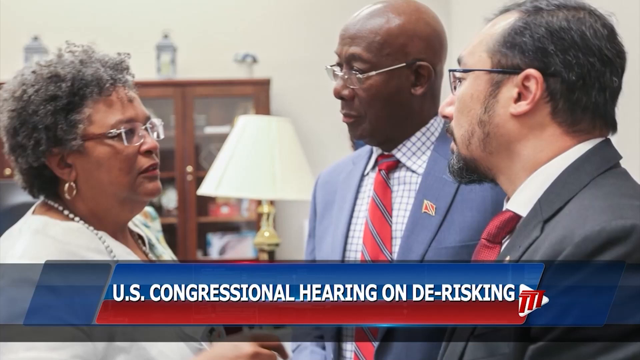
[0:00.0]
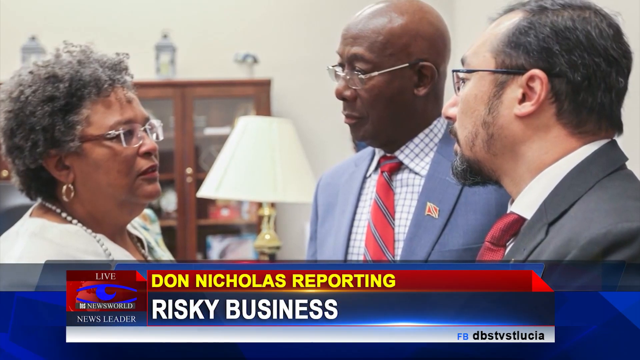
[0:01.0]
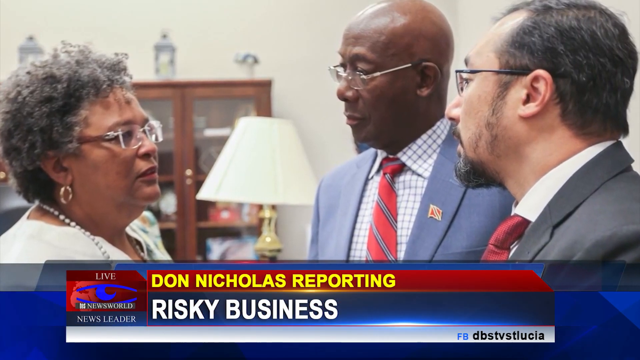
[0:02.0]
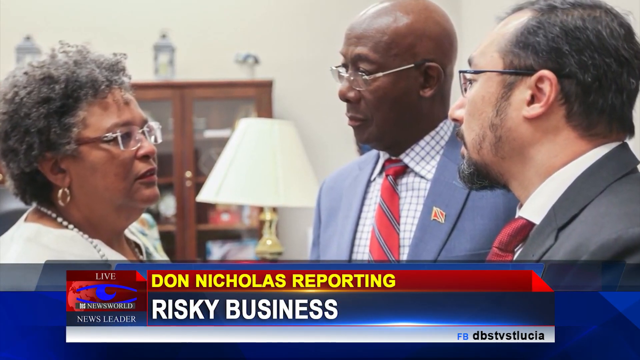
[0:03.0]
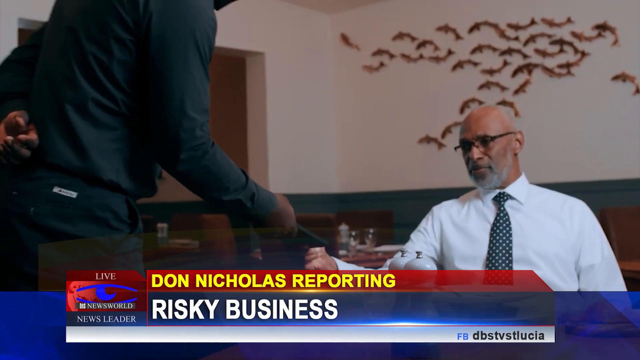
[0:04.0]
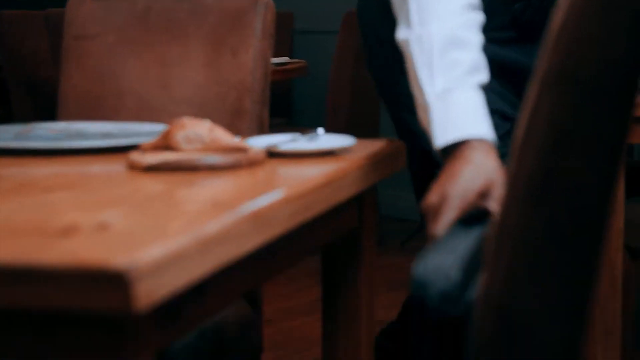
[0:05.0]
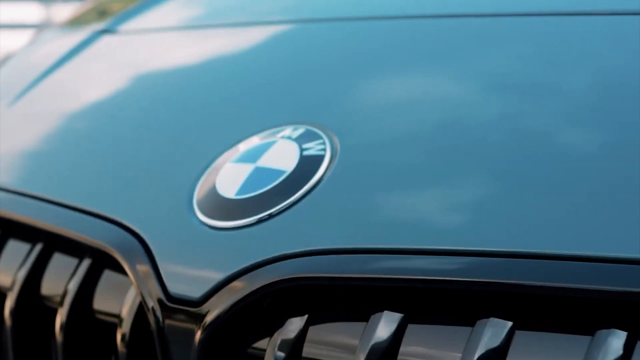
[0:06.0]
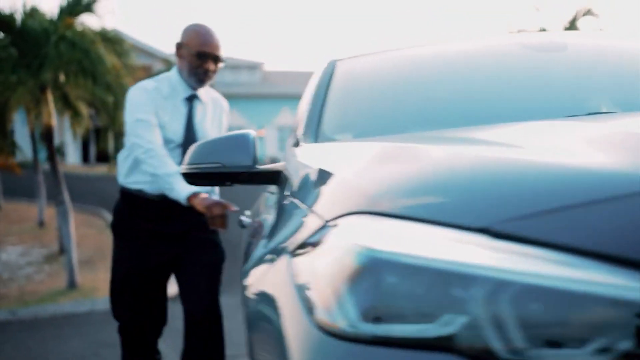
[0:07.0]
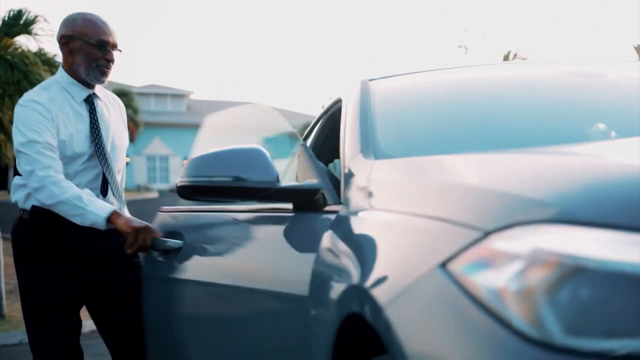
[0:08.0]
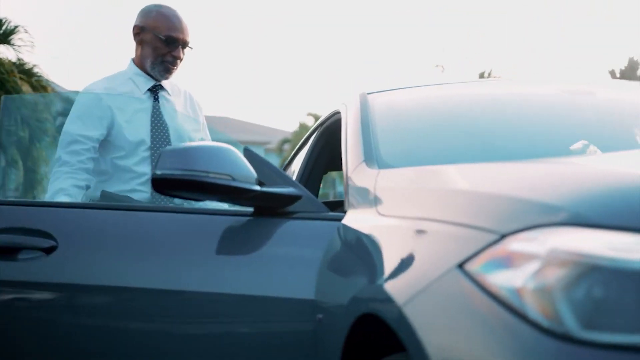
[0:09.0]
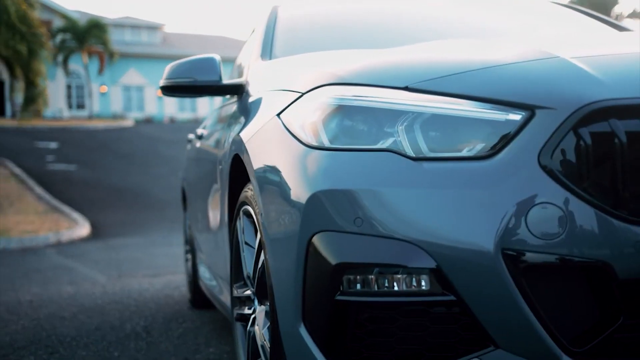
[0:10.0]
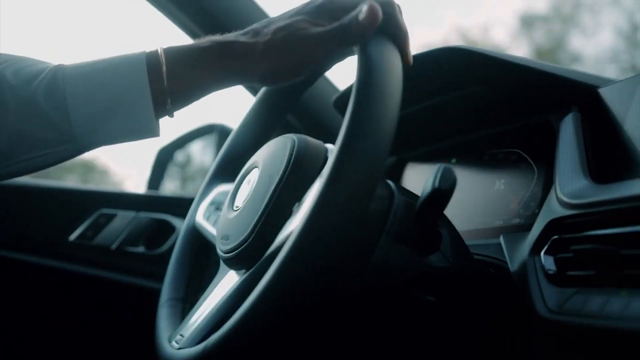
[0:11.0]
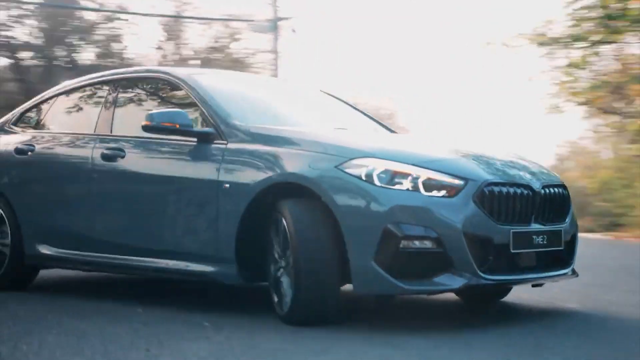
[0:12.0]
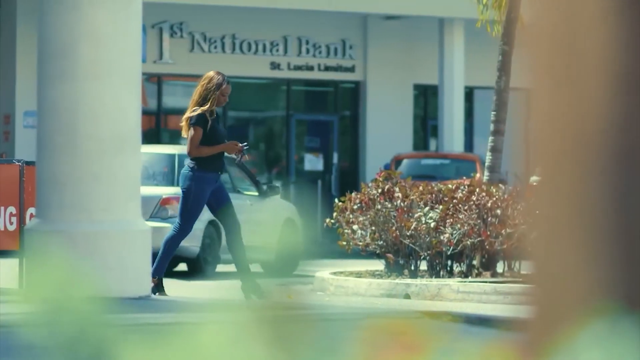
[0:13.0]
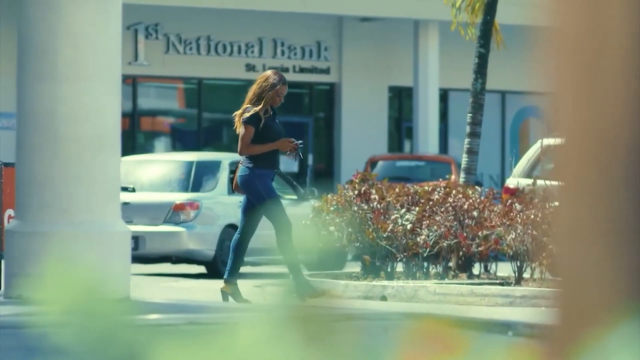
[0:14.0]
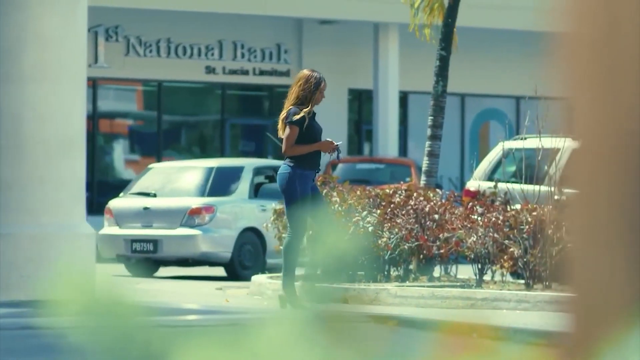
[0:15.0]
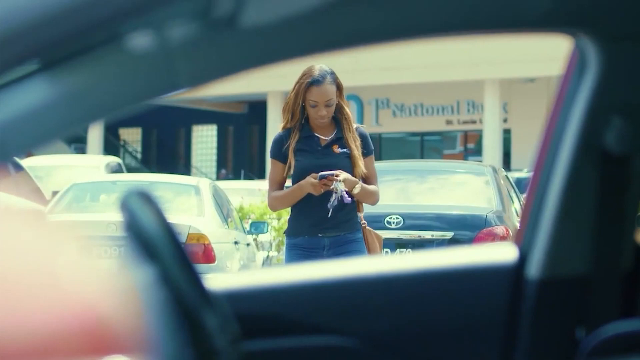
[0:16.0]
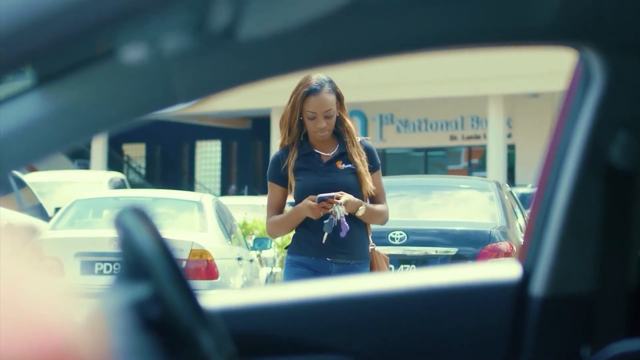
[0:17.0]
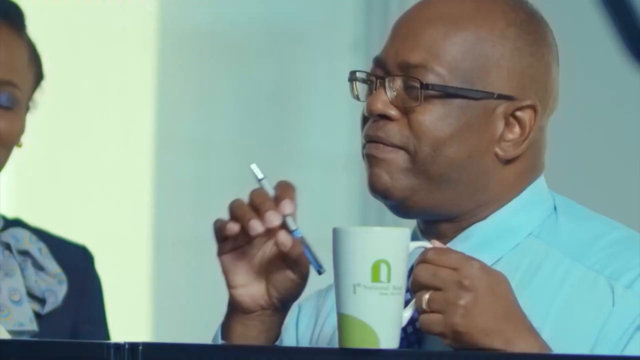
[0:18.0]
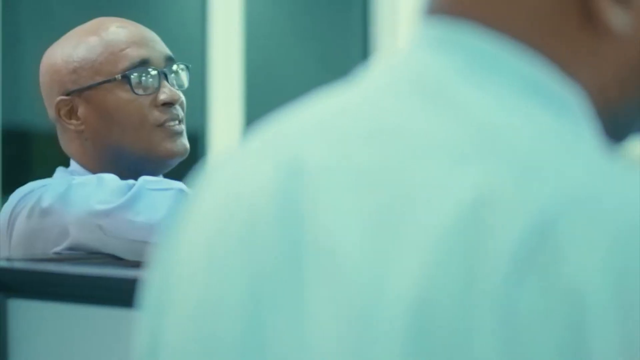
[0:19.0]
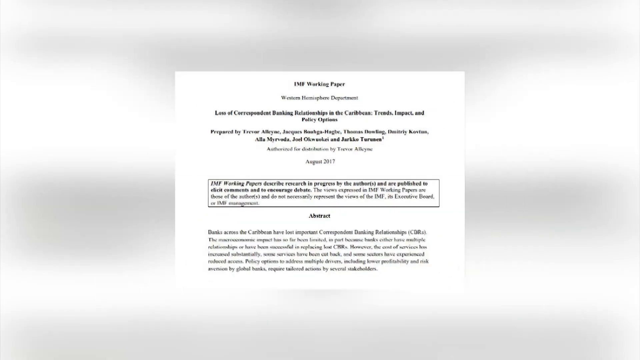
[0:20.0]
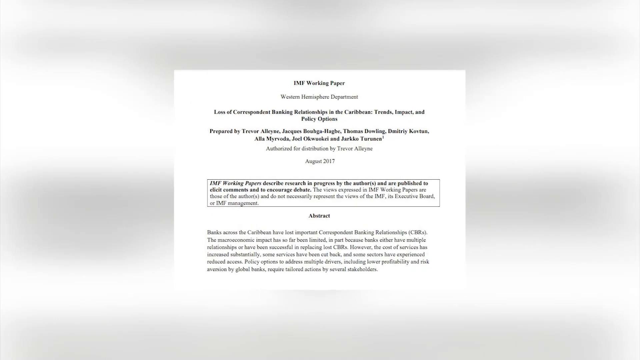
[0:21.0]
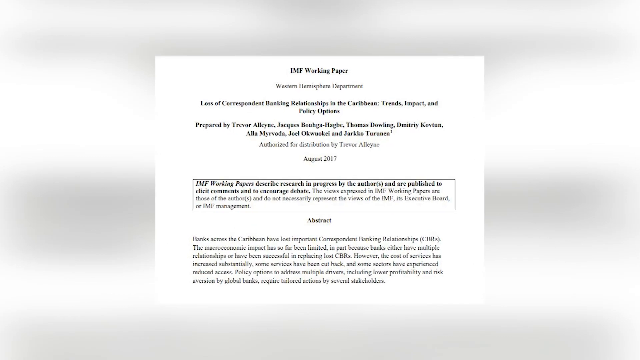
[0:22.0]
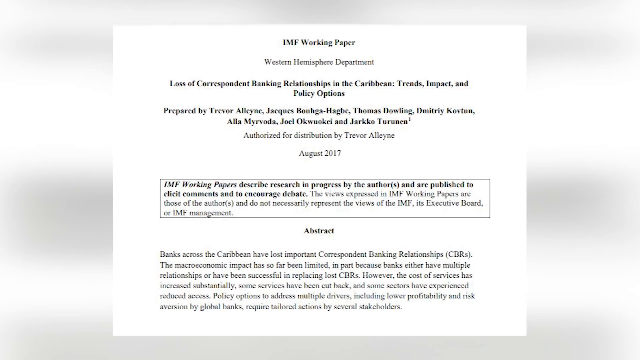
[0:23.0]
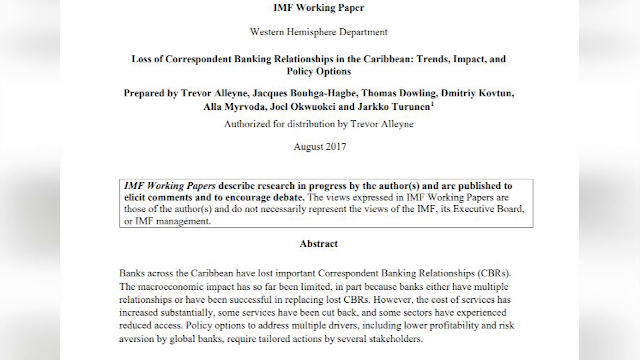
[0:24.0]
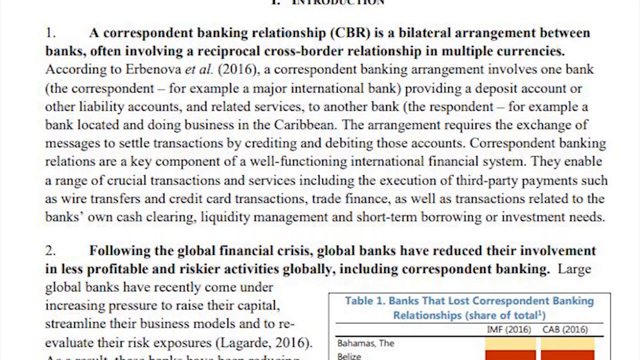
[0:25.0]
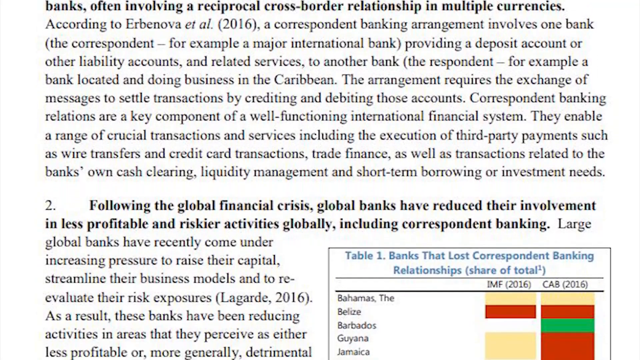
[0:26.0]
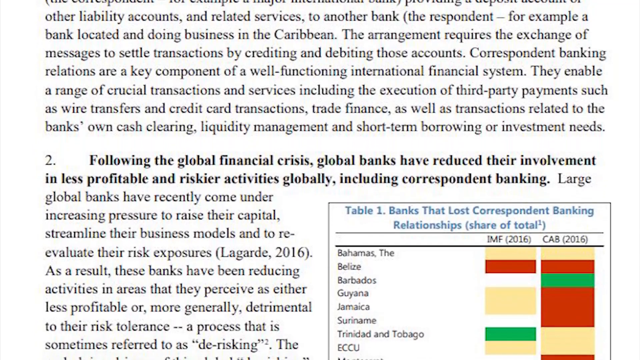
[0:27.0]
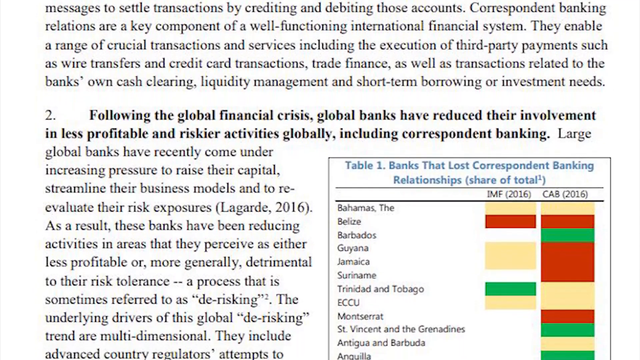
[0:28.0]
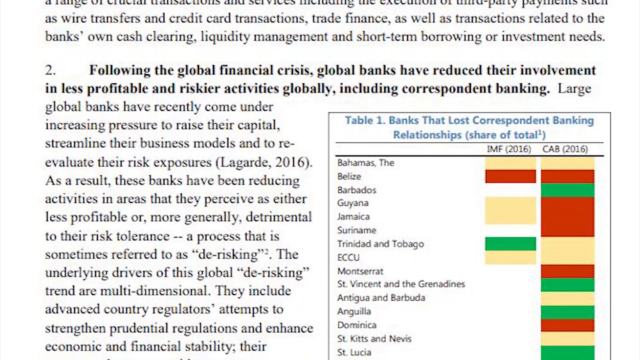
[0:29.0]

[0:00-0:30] White text in all capital letters at the bottom of the screen begins "U.S. Congressional". Three people are visible. A man on the right side of the screen looks Asian and wears black glasses, a black or dark gray suit and a red tie. Next to him is a bald black man with silver glasses, a grayish suit, a red, gray and black tie, and a checkered blue and white shirt. Both men are facing a black woman who wears a pearl necklace, a cream, off-white top and glasses. A cabinet is in the background, along with a lamp that has a white lampshade and a gold base. Yellow text reads "Don Nicholas reporting", with white text underneath reading "risky business", and the words "live news" also appear. A man then leaves a restaurant after paying and gets into his car, a BMW that is possibly a sedan. The First National Bank in St. Lucia is then shown.